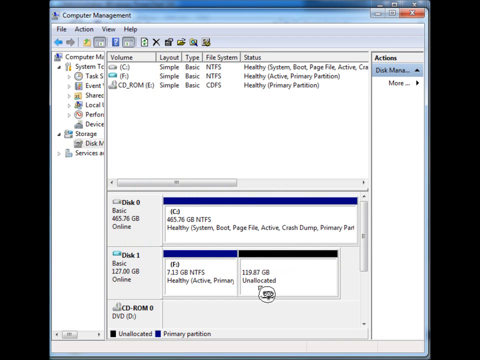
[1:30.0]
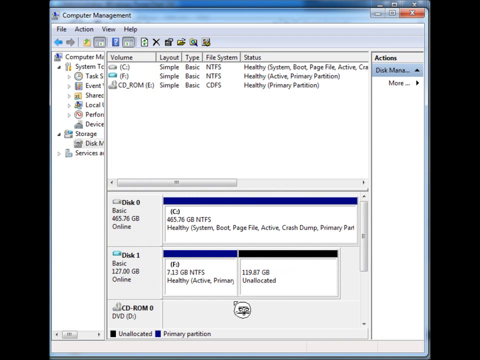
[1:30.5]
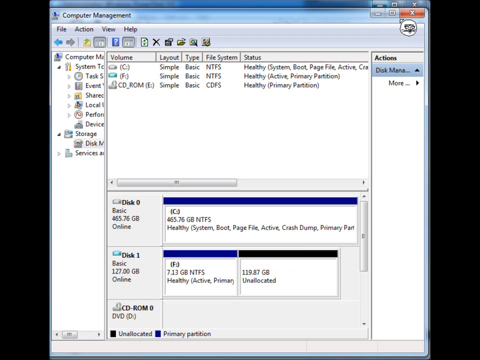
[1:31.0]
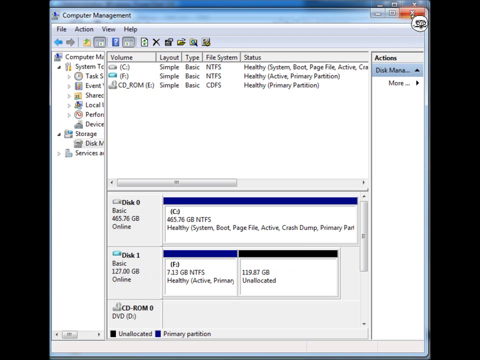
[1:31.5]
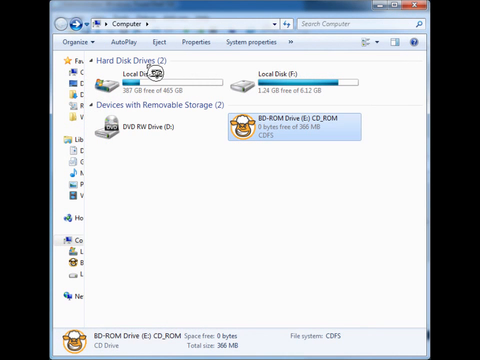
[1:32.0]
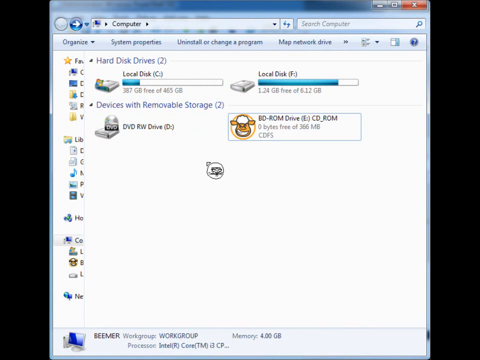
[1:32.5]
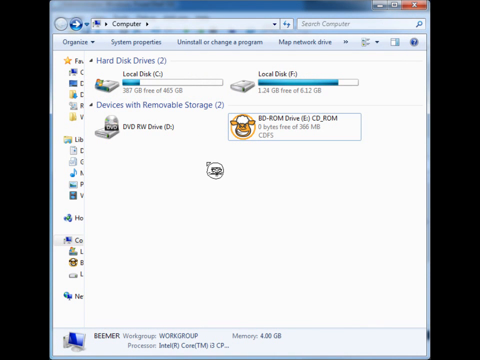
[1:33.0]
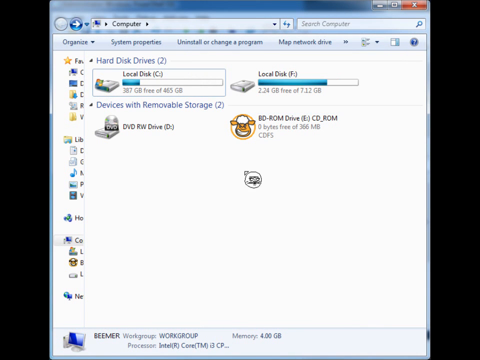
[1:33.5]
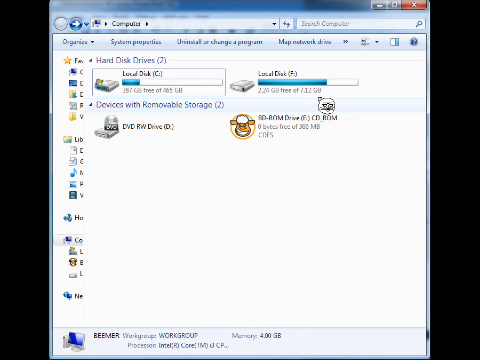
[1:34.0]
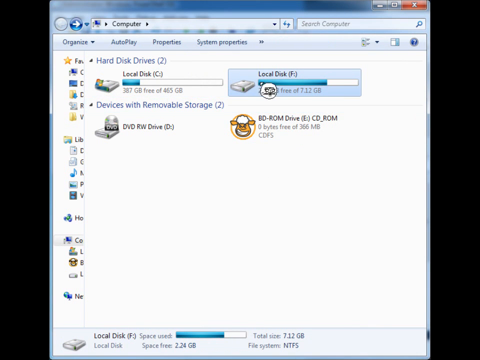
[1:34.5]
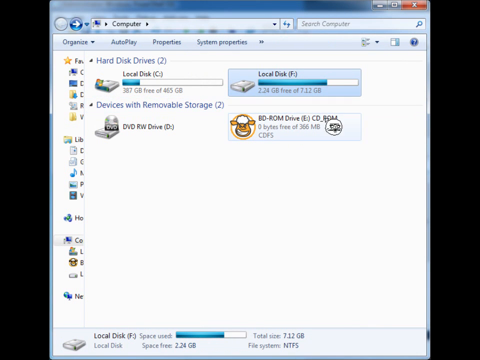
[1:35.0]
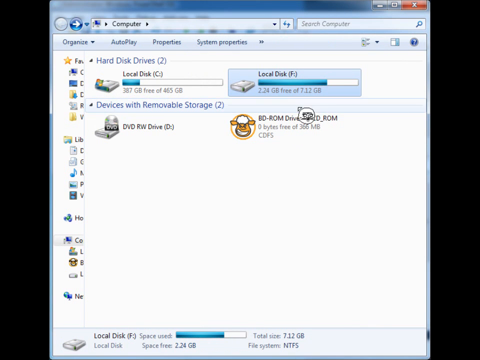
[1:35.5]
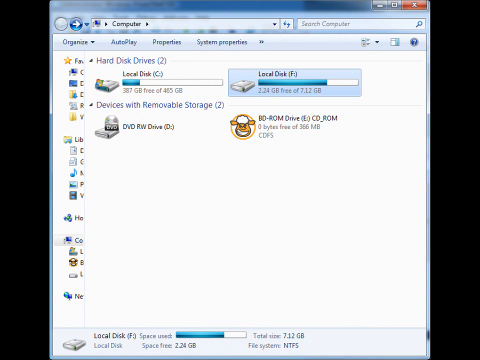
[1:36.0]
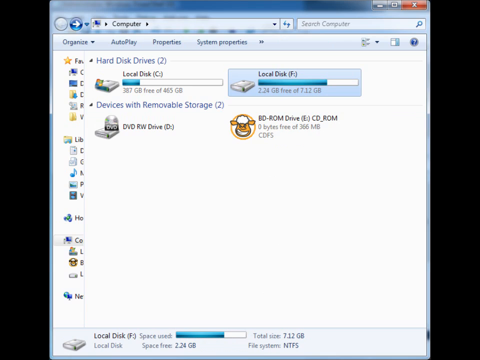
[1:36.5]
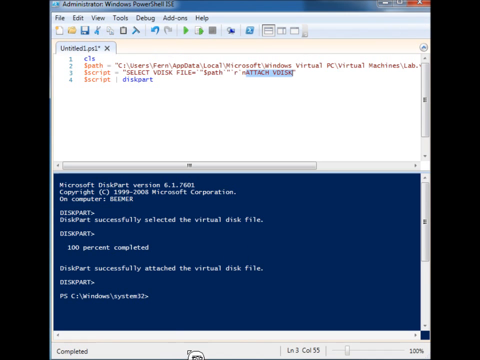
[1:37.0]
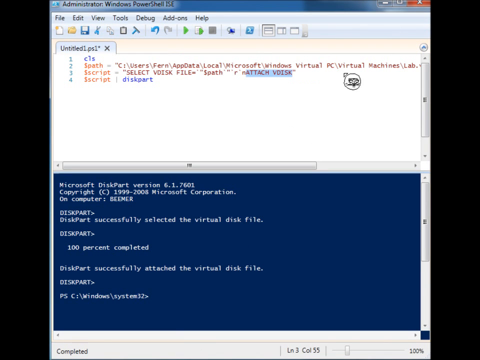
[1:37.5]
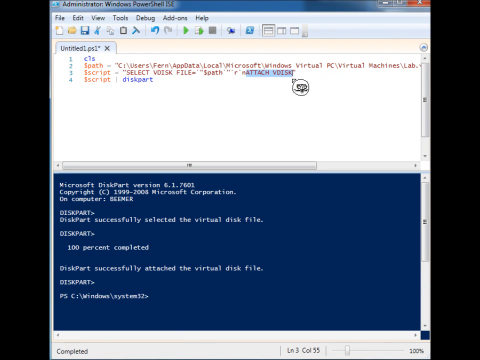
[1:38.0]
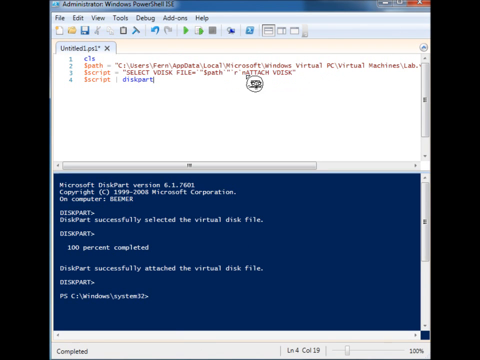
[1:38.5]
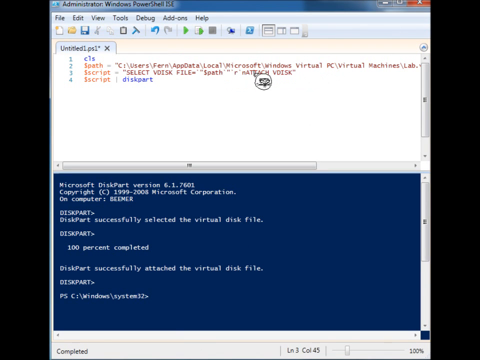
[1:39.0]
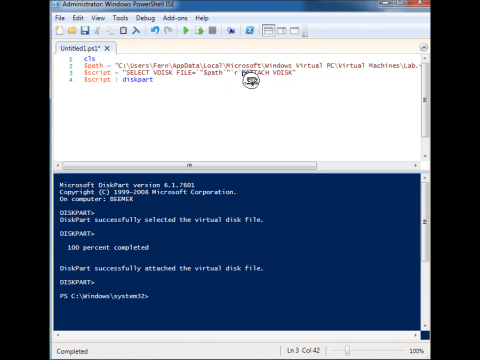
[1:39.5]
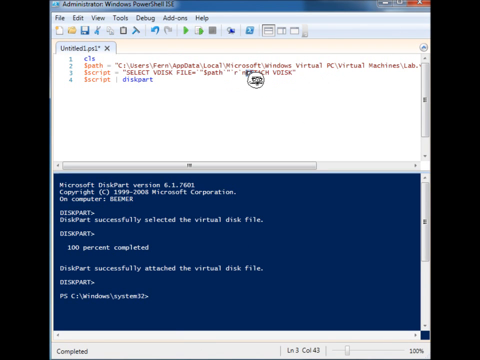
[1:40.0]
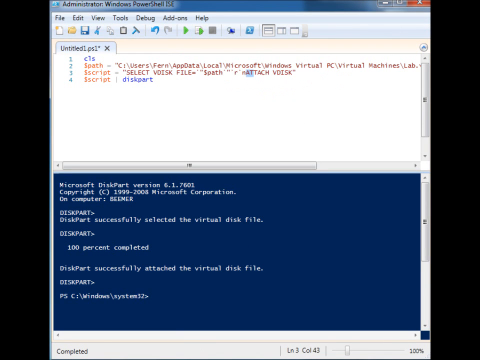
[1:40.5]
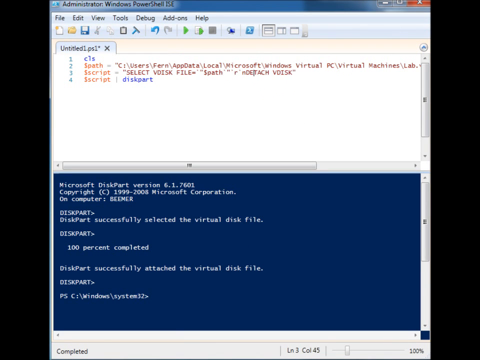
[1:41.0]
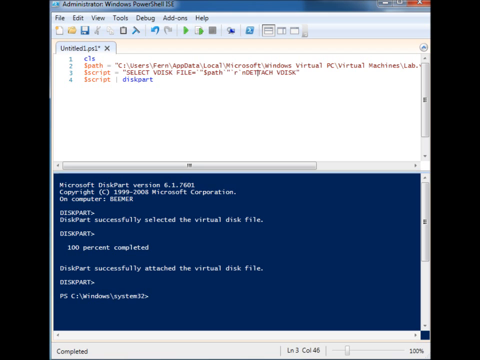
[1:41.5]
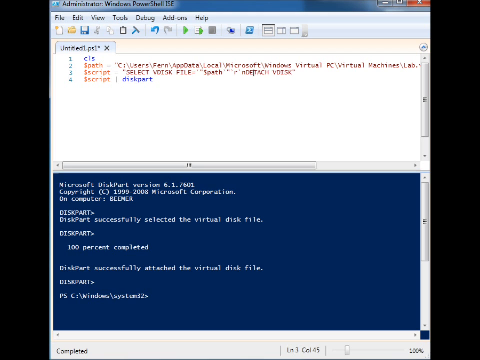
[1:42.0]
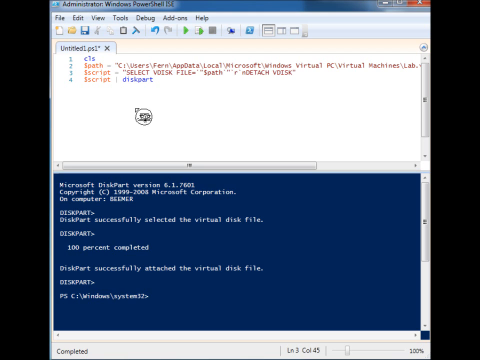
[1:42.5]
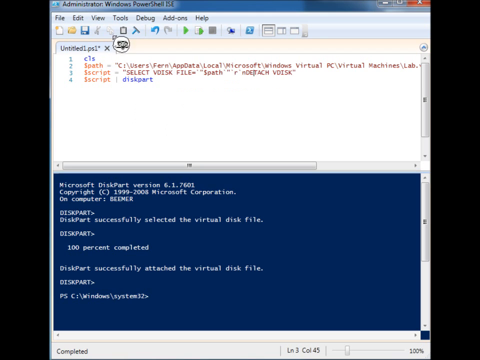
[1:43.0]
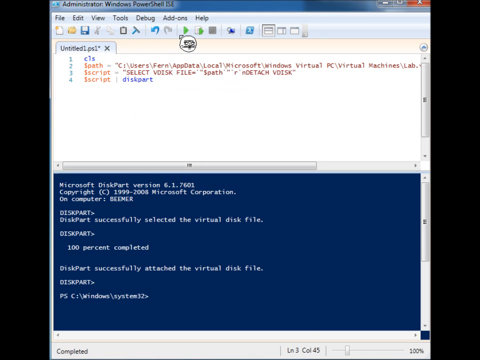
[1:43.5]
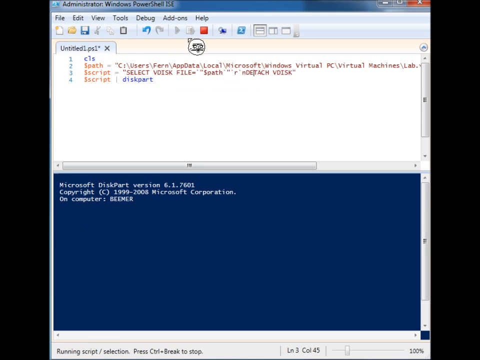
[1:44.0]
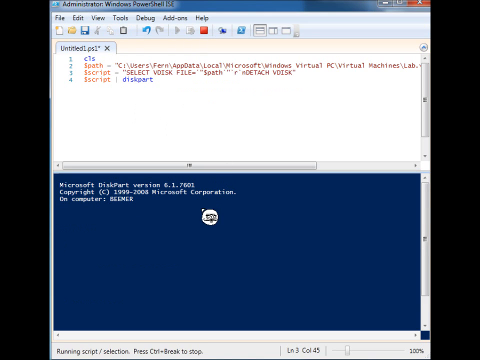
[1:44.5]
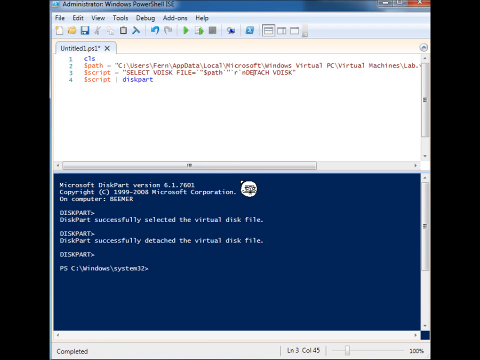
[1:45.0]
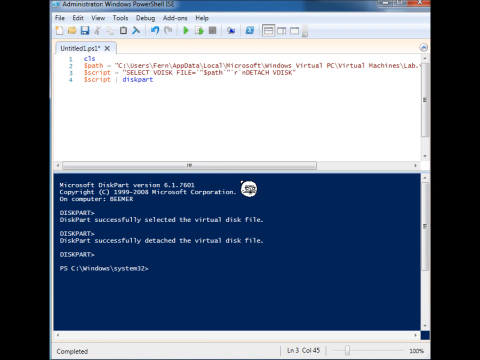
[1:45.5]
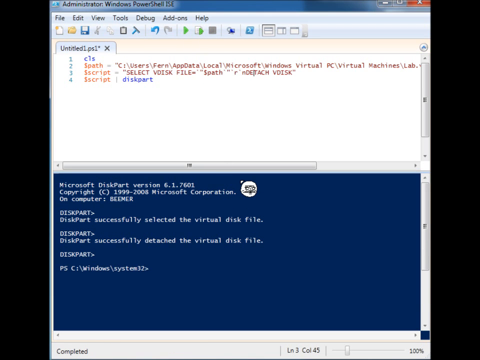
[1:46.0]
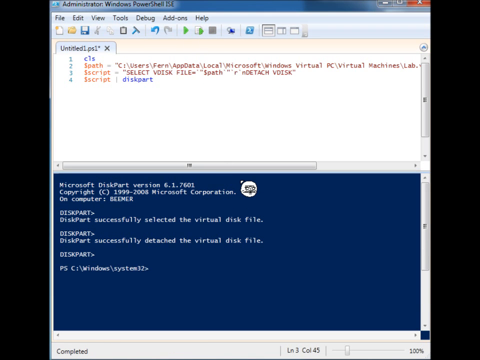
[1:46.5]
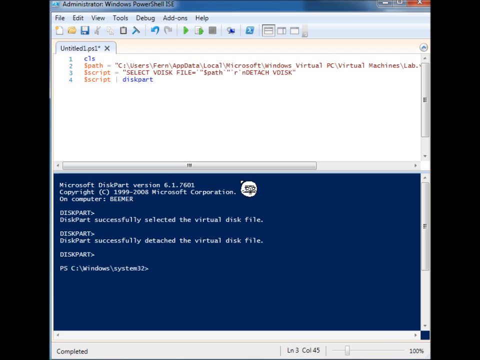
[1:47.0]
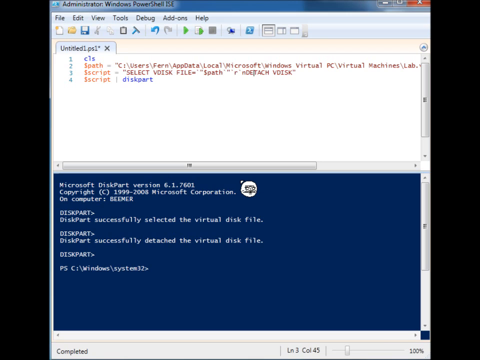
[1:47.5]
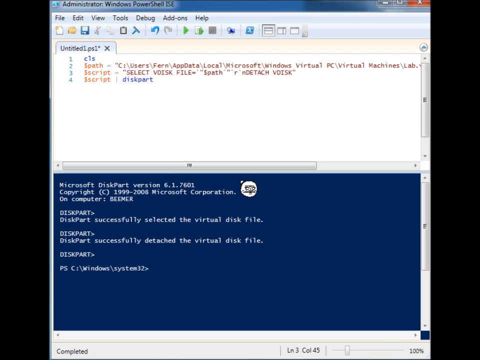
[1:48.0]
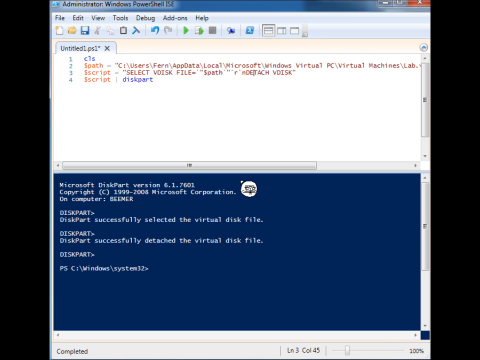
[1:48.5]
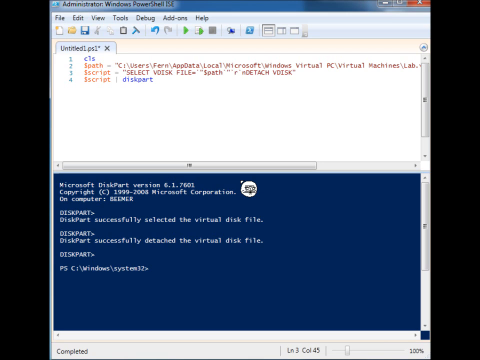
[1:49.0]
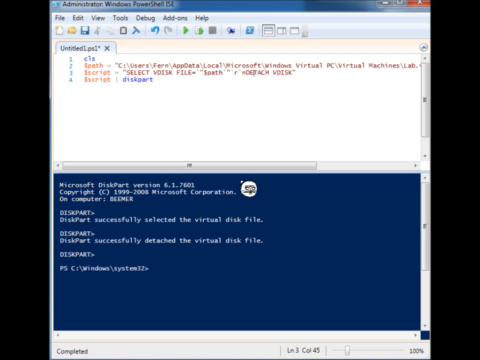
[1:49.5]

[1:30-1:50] The computer management window is shown. The cursor clicks the red X in its upper right-hand corner, closing it and revealing the list of hard disk drives connected to the computer. The cursor appears to click on local disk F. The cursor then moves over to the administrator Windows PowerShell, where the text on line three, attach vdisk, is highlighted. Using the cursor, the word attach is changed to detach. The green play button near the top of the window is pressed, and the command is apparently executed. The command line window shows that DiskPart successfully selected the virtual disk file, and then that DiskPart successfully detached the virtual disk file. DiskPart apparently refers to the script on line four.